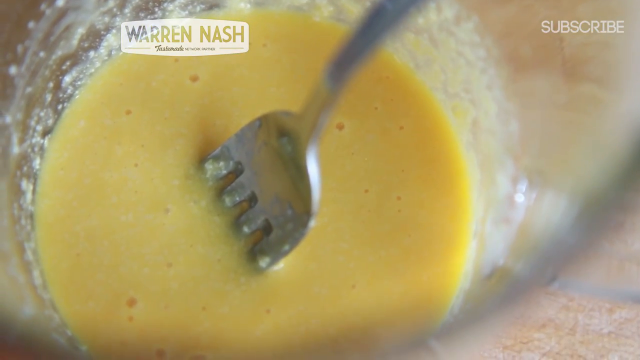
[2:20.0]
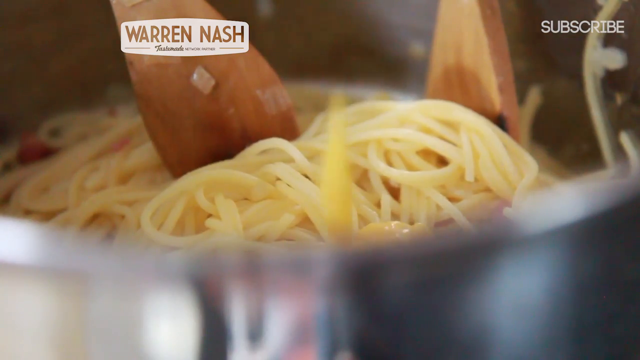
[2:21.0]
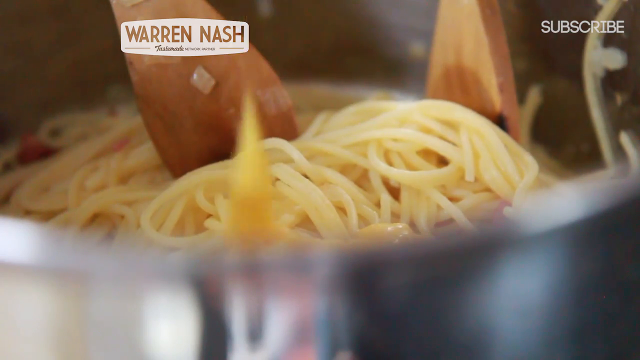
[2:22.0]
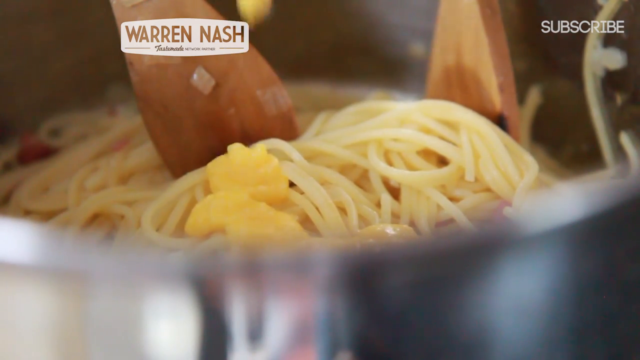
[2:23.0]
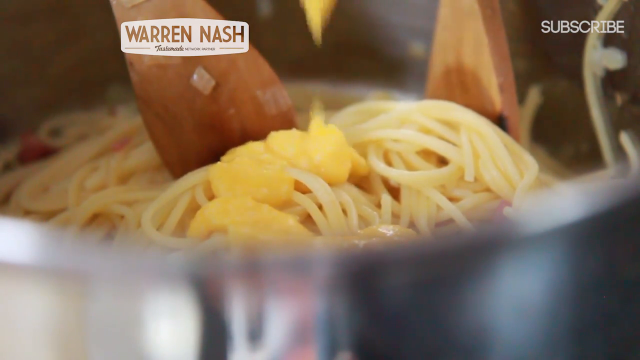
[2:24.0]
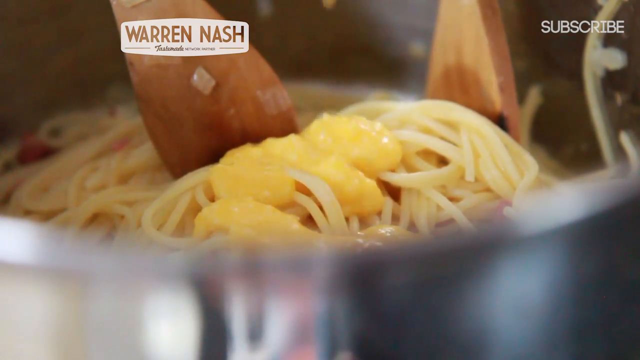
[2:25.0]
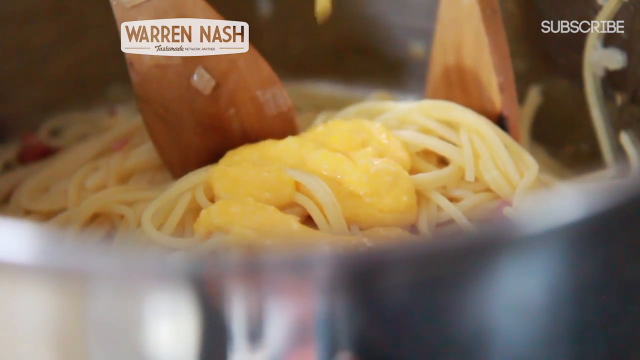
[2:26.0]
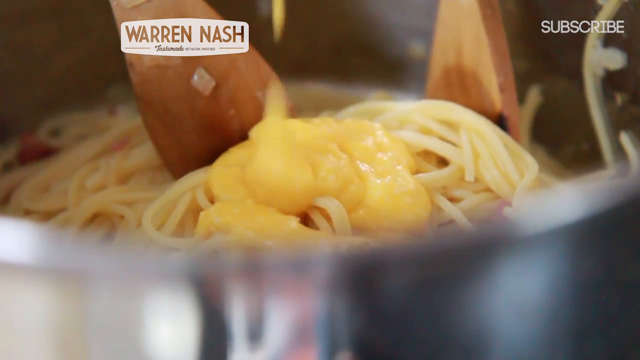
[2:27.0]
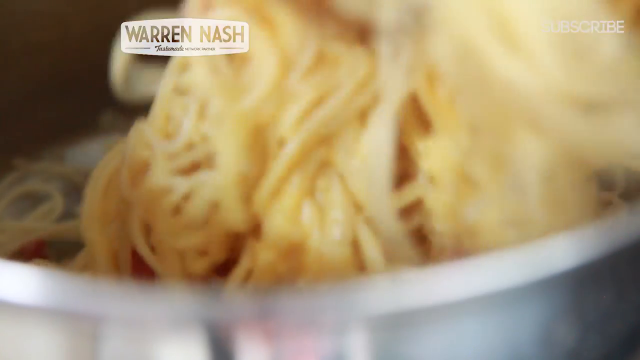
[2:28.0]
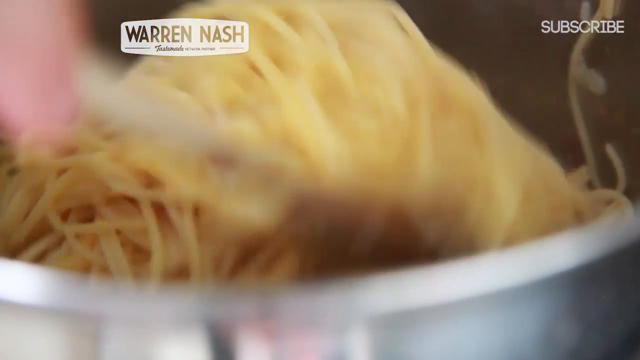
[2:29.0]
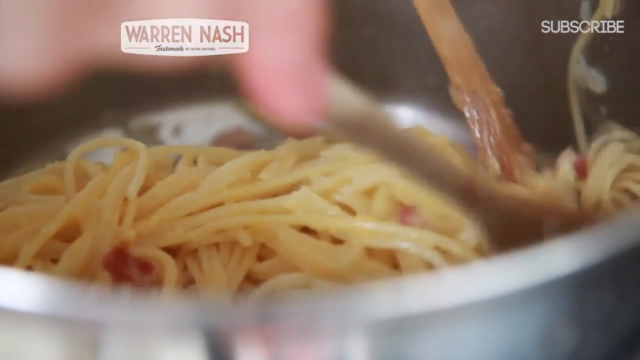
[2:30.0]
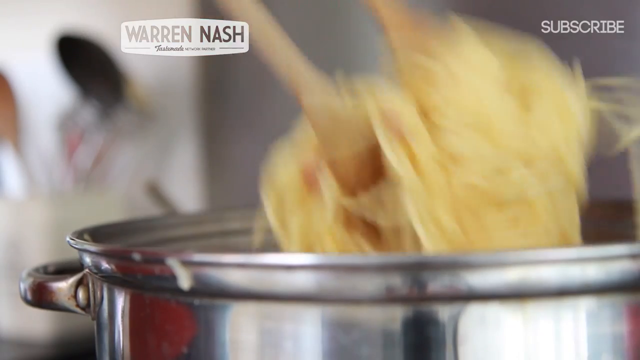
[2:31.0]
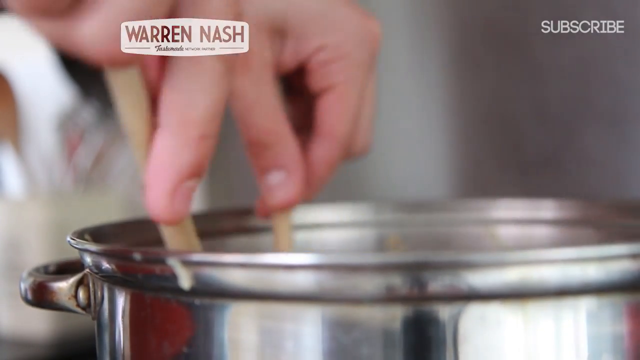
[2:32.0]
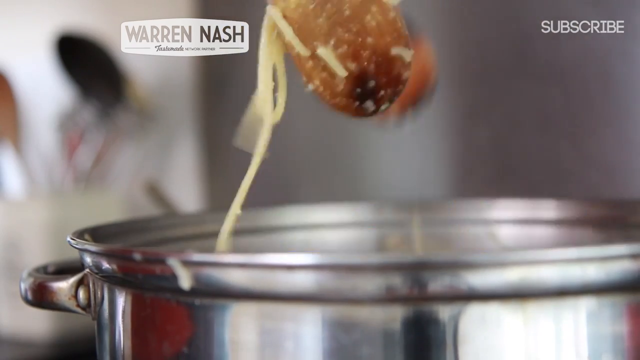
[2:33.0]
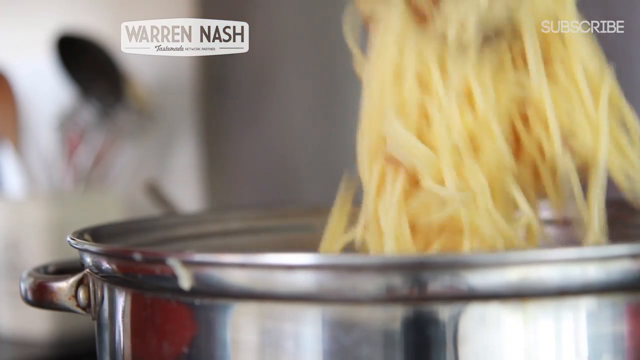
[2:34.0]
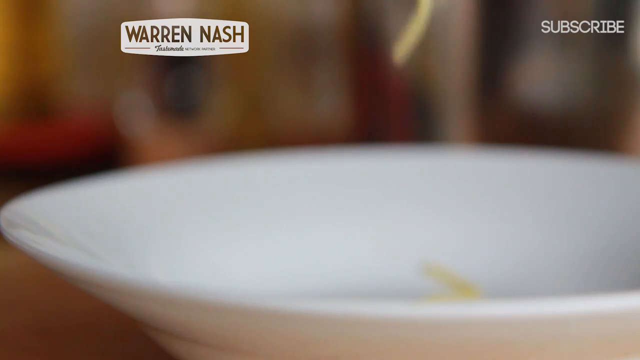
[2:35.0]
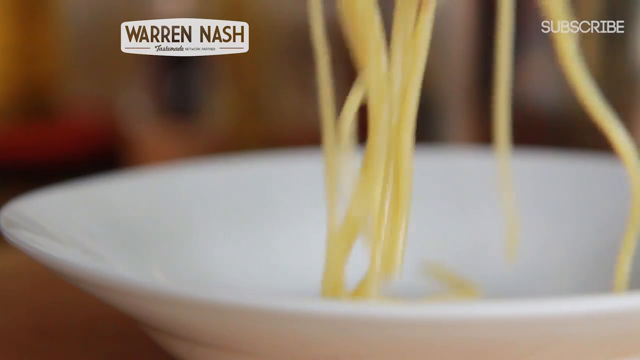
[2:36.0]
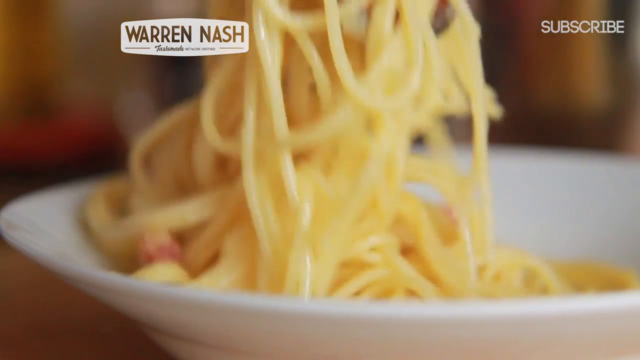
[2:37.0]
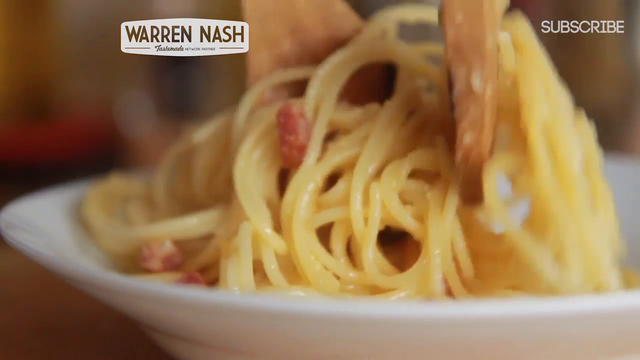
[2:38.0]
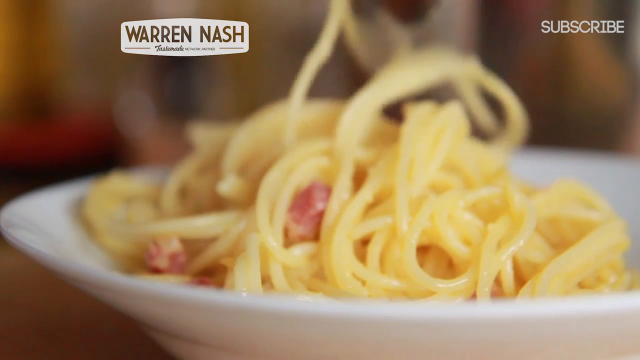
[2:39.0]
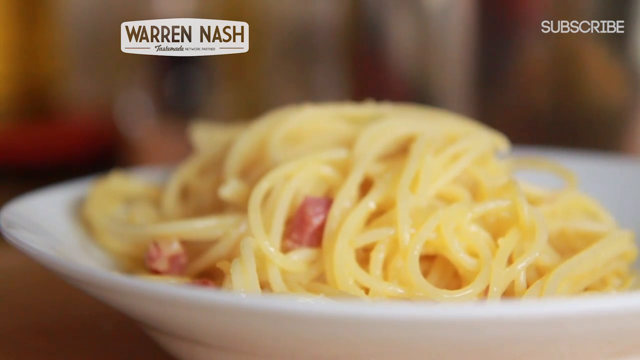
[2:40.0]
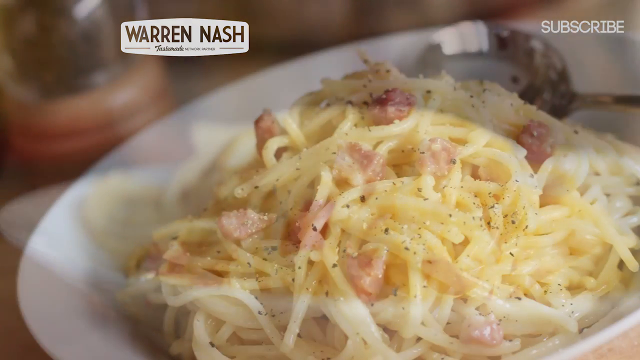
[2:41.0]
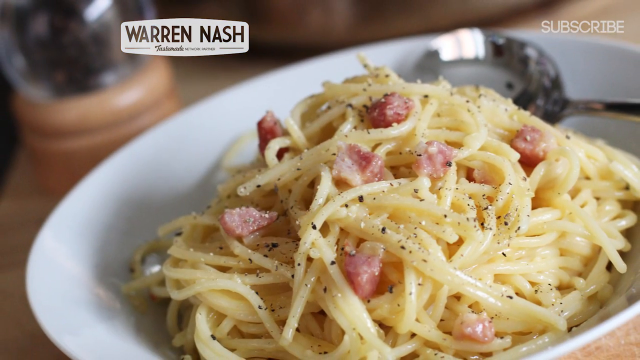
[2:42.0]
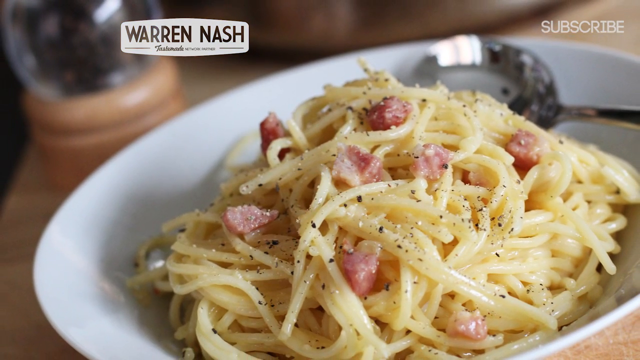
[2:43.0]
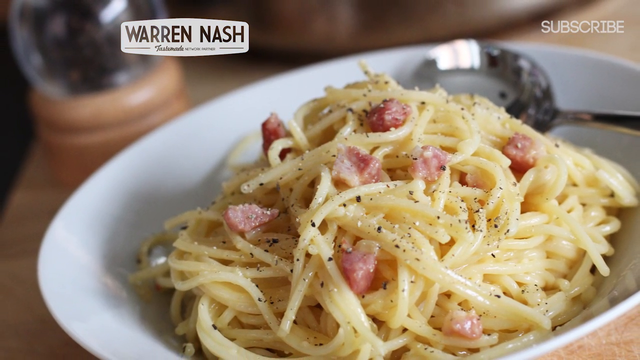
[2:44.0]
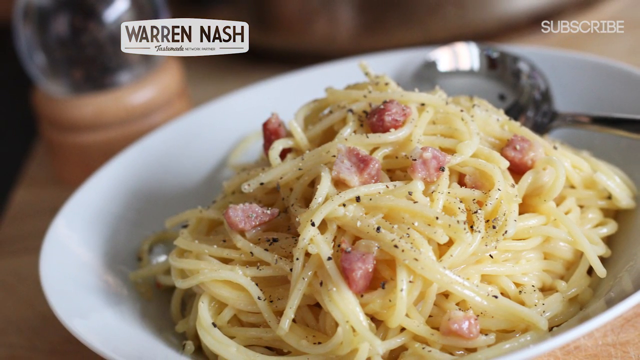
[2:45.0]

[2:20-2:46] After mixing the egg yolks with sugar and lemon juice, Warren pours the mixture into the spaghetti and mixes it together with the bacon, onion and butter. No cream is added, only the egg yolk mixture. He dishes up the final product on a white serving dish with a silver tablespoon and sprinkles on some salt and black pepper. Bits of bacon and the black pepper are visible in the dish. The serving dish is placed on top of a wooden table that looks a little brown.